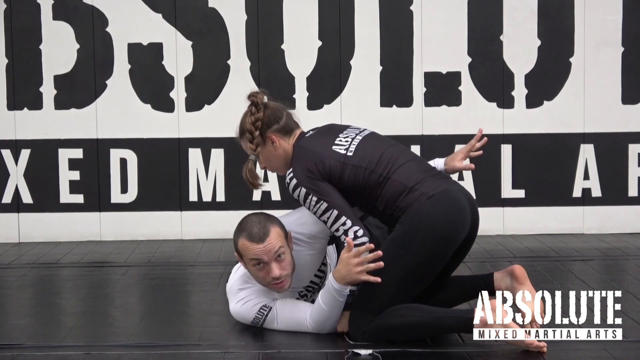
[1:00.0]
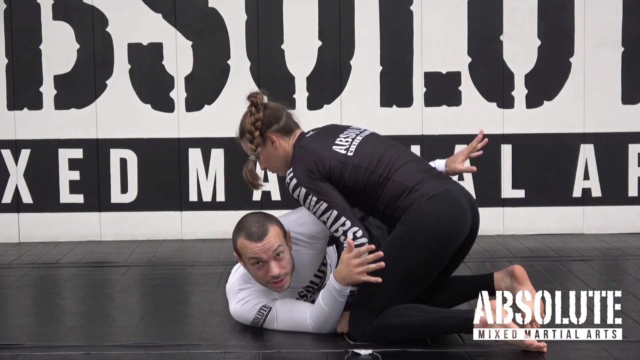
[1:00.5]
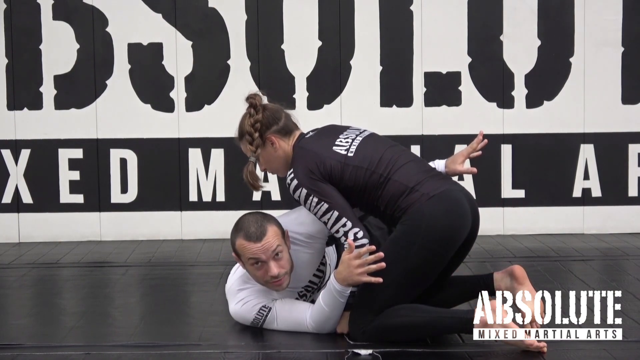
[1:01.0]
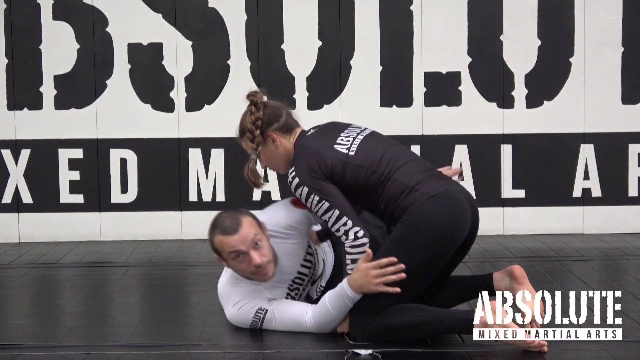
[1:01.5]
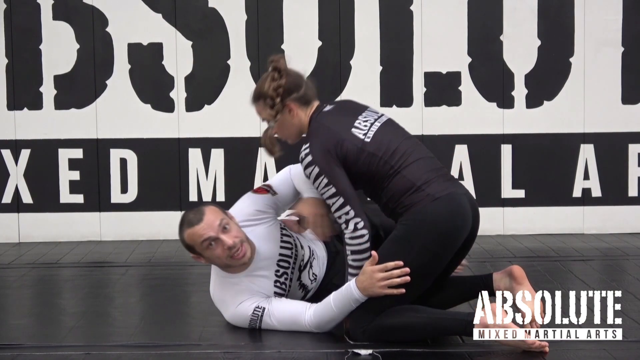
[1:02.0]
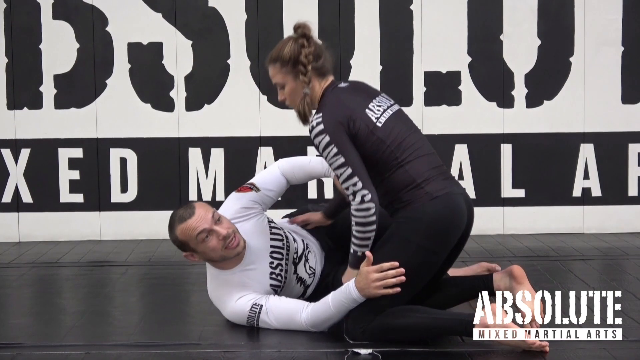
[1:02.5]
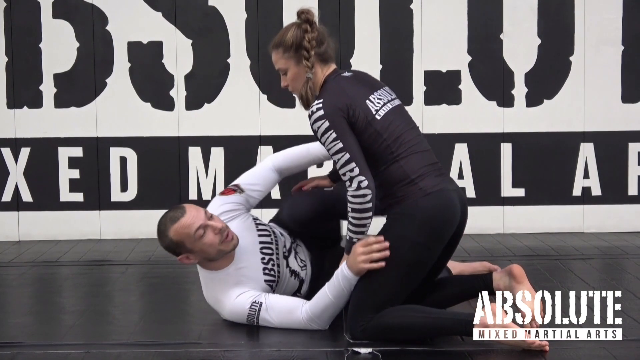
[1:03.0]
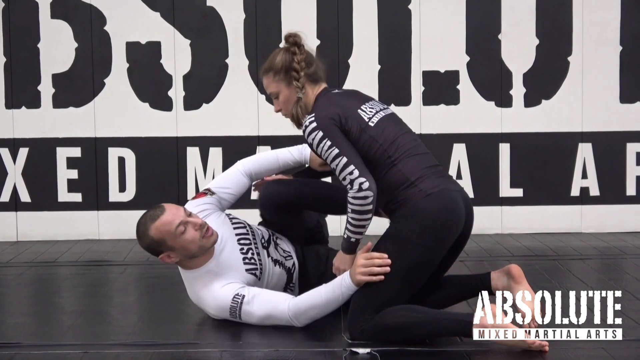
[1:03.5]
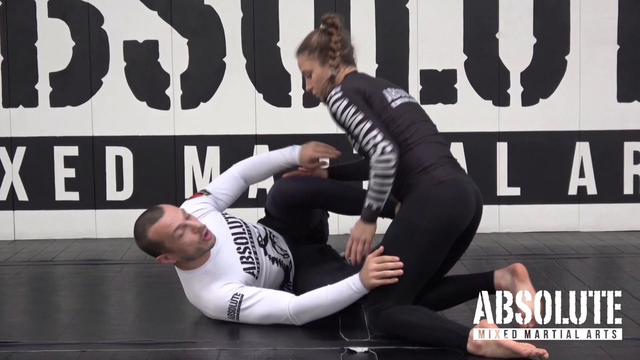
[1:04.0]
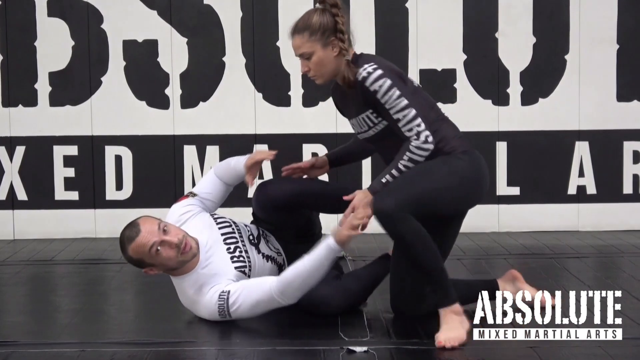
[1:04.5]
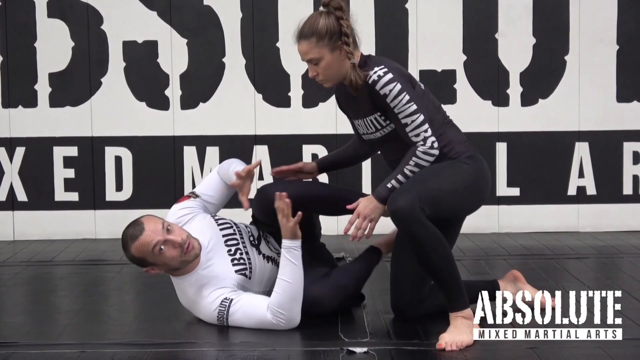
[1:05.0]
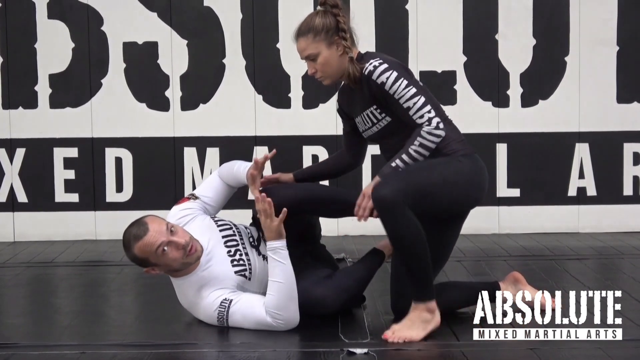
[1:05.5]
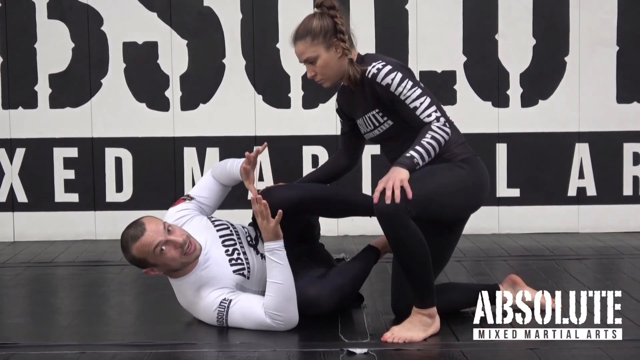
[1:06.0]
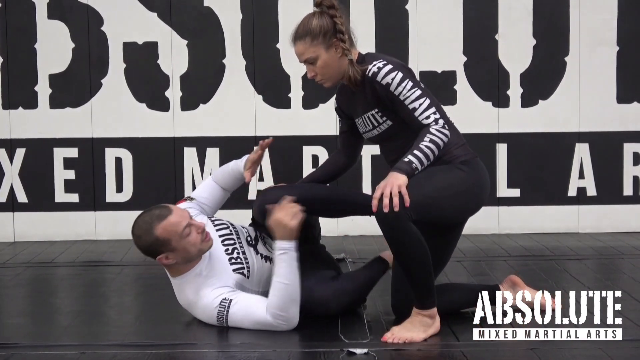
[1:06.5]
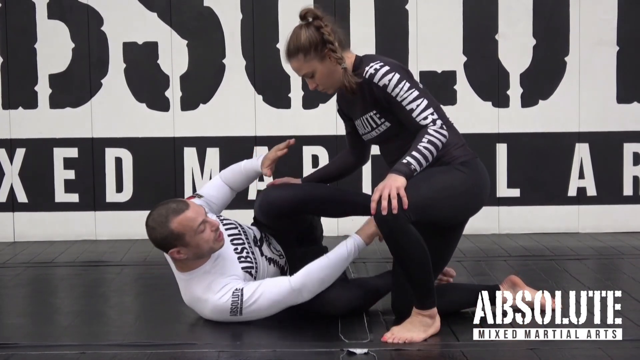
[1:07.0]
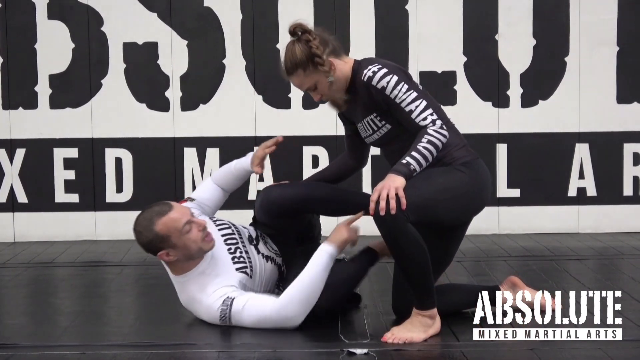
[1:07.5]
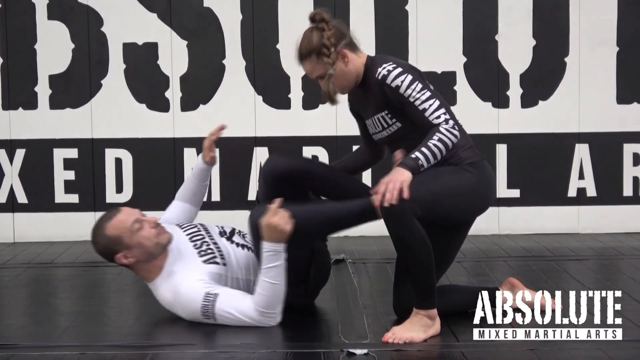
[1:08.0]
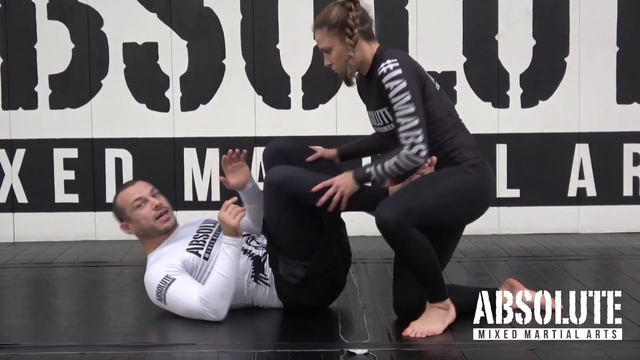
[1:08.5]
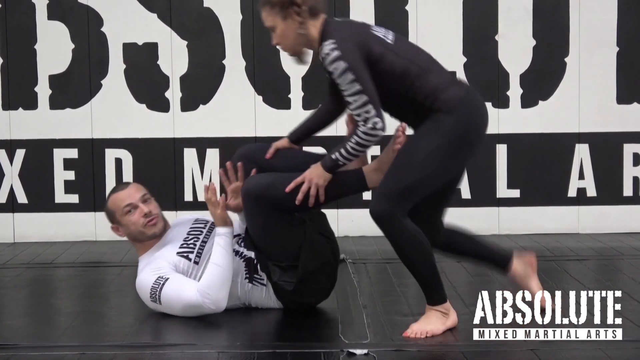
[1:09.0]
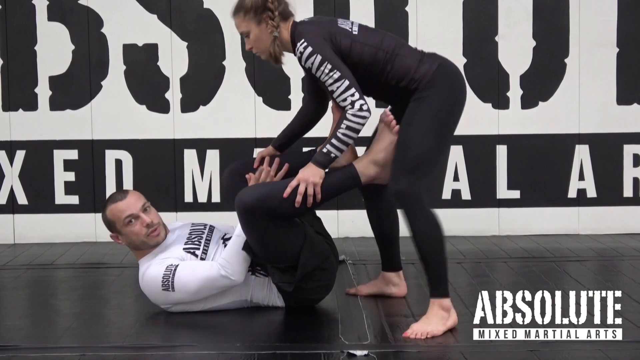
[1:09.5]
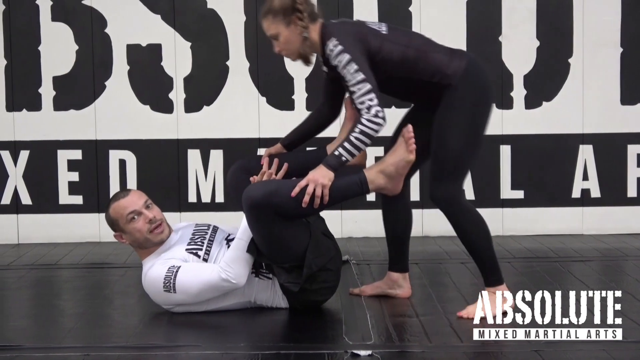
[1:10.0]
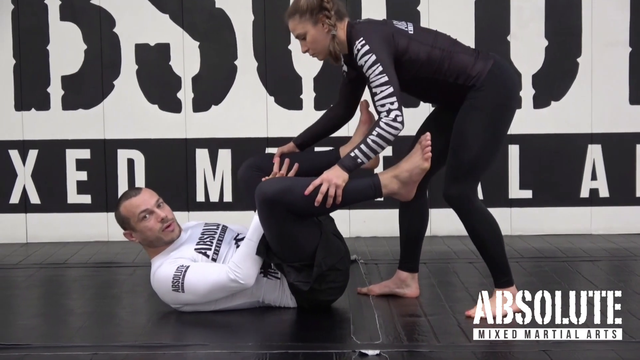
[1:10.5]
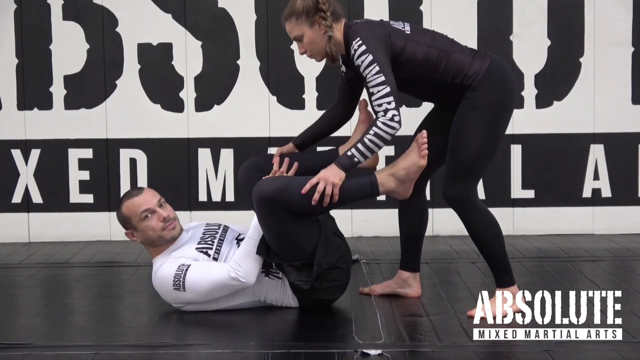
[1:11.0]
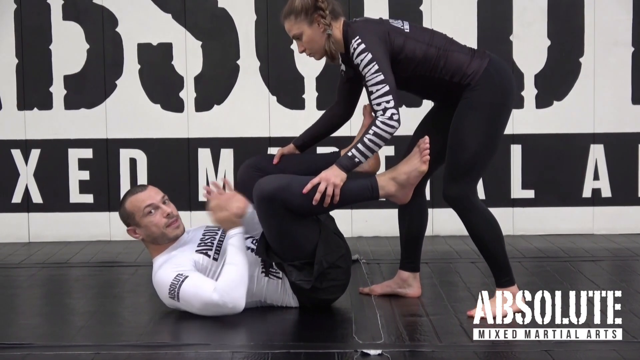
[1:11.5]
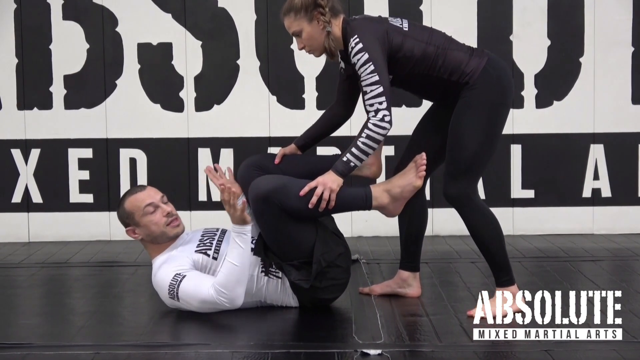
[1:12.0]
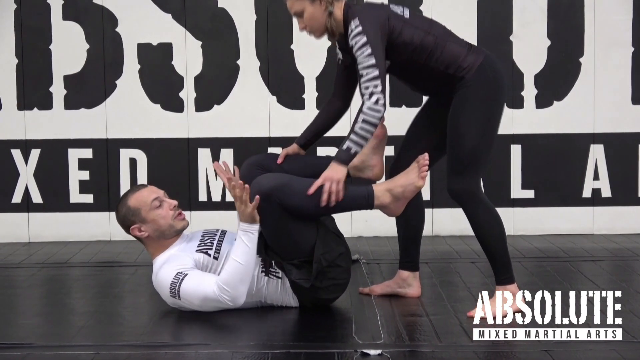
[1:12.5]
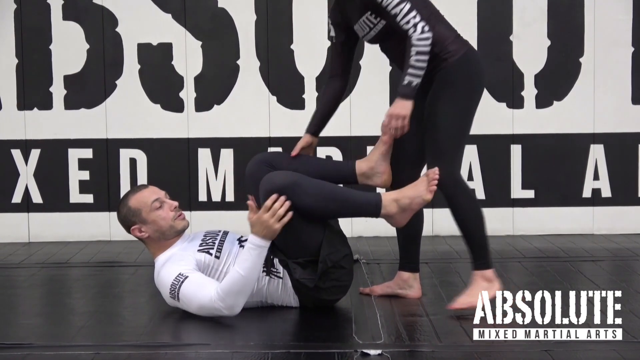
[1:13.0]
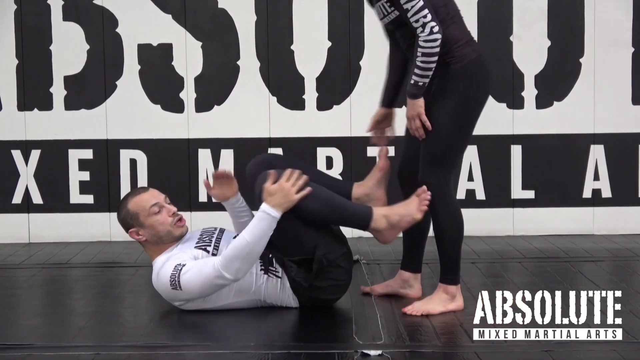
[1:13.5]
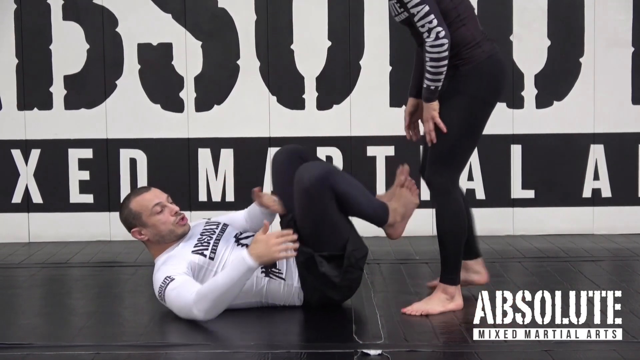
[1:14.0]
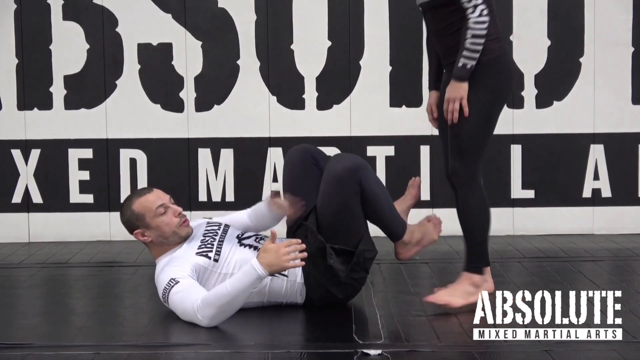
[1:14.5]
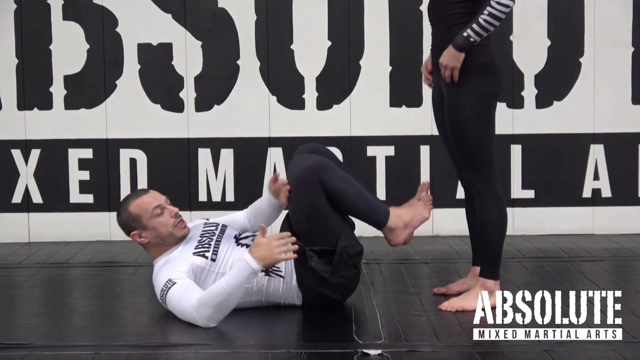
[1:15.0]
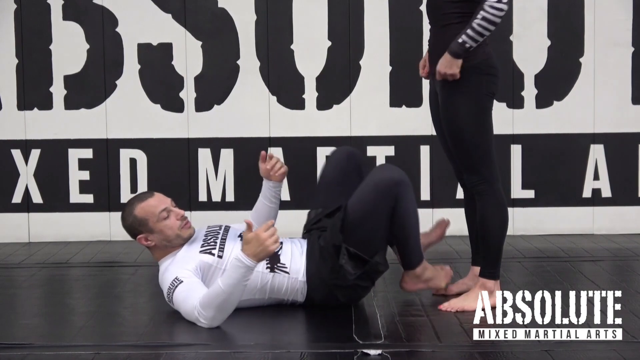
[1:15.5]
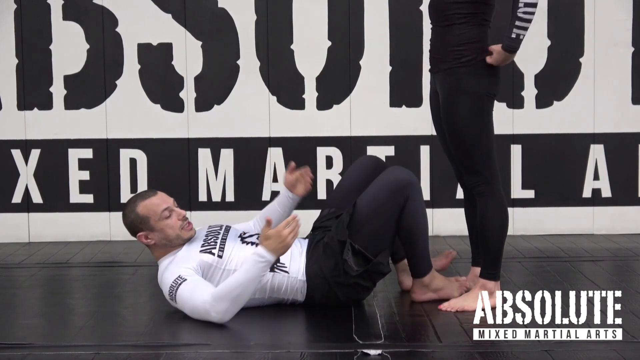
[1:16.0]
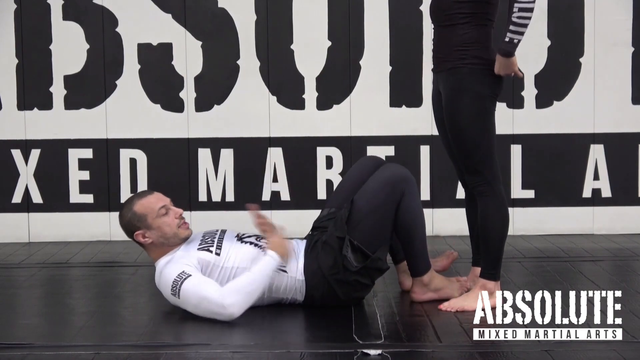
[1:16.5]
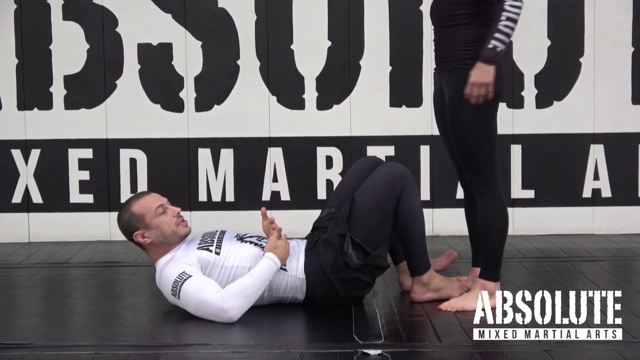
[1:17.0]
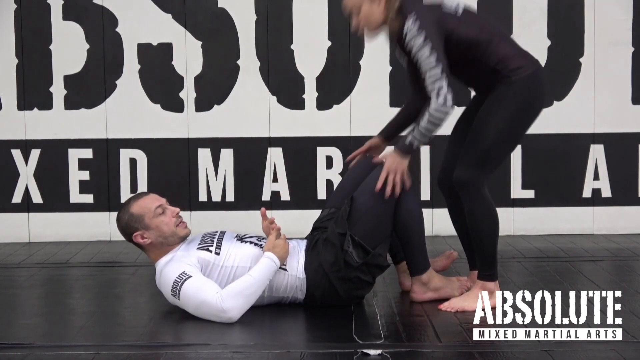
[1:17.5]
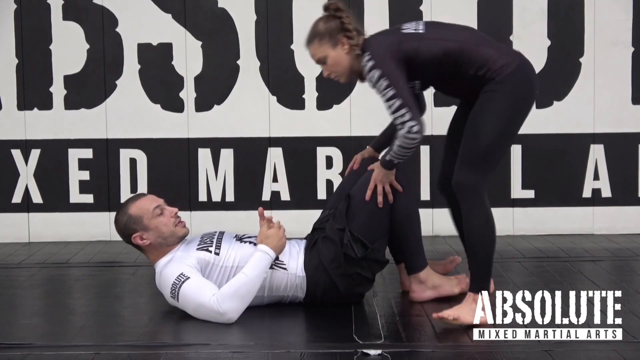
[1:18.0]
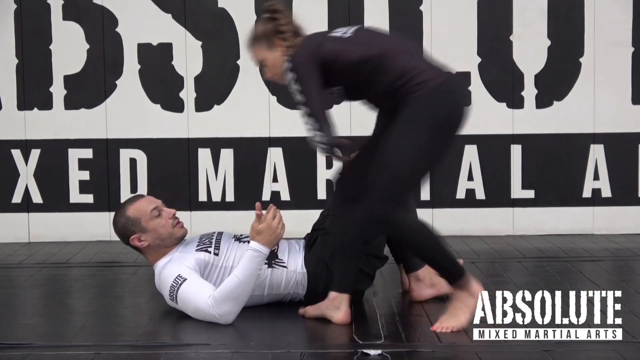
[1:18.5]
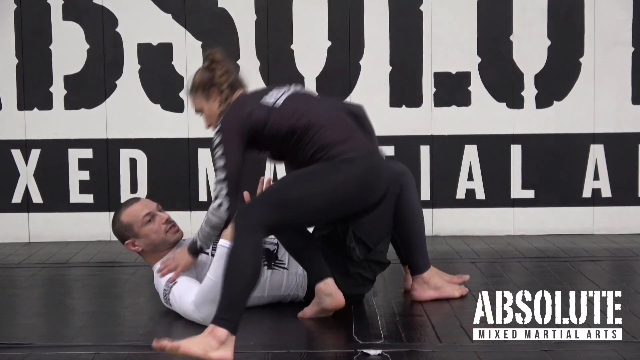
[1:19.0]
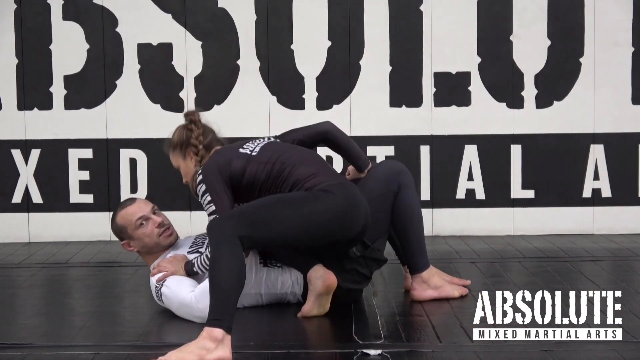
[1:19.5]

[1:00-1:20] A man and a woman are on the ground of a Brazilian jiu-jitsu gym or a wrestling-type gym, with a black mat beneath them and a white padded wall with black block print lettering behind them. The man, a muscular white male with very short hair and slight facial hair, wears a white spandex shirt and black spandex pants and looks at the camera. The woman wears all-black spandex with white lettering on her shirt and has brown hair in a ponytail and a braid. Both are barefoot. They are in a wrestling position, and the man speaks to the camera, seemingly explaining his movements. The woman, who was on her knees, is now standing on her feet over his knees, bent at the waist, while his feet face upward vertically and his hands are near his knees as he speaks. The woman then stands up fully, still over the man, as he gives instruction about the next movements, pushing his left hand towards his chest, then using both hands coming down from his chest until they are above his stomach. The woman positions herself and they prepare for another move.